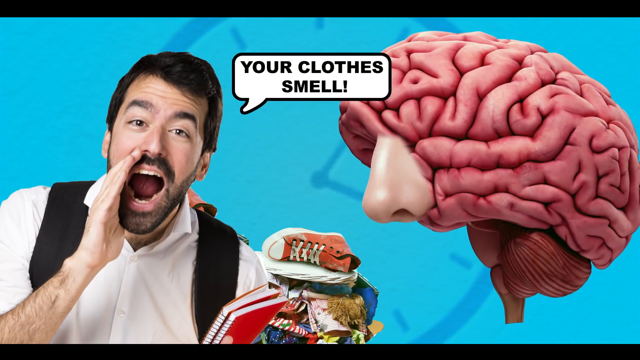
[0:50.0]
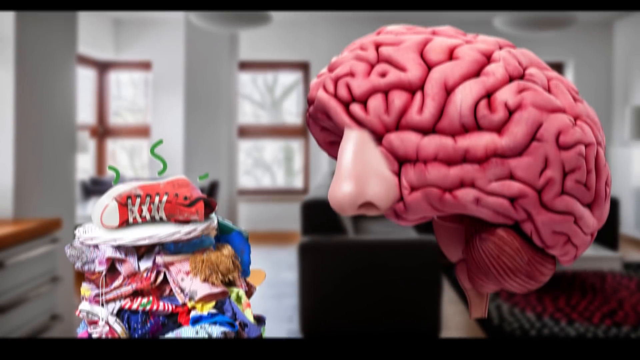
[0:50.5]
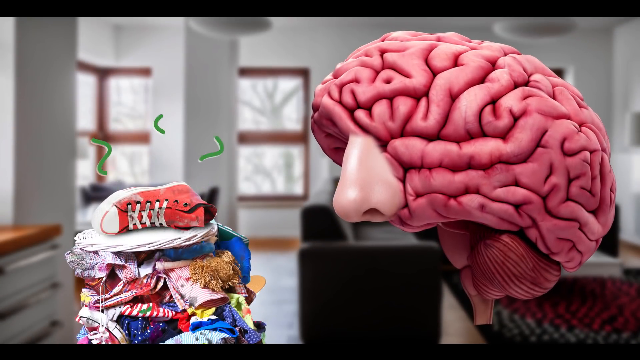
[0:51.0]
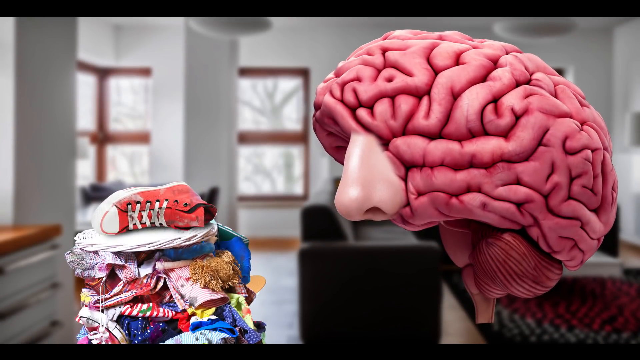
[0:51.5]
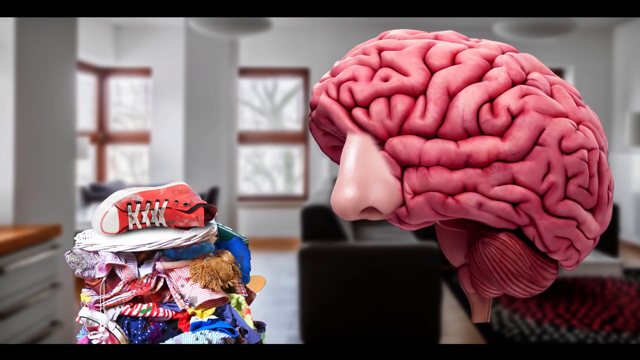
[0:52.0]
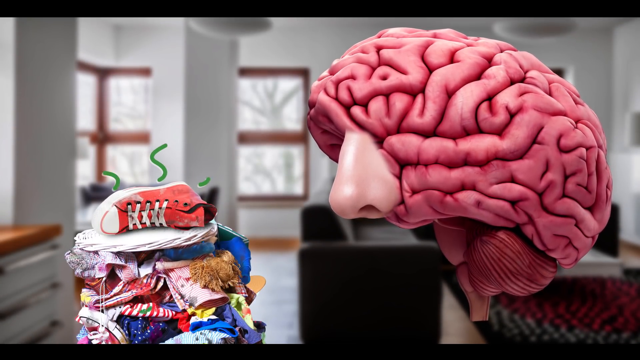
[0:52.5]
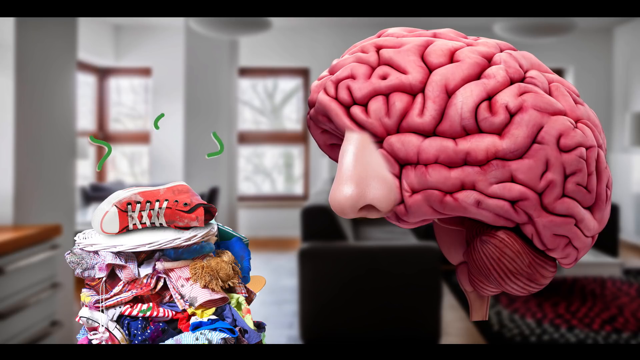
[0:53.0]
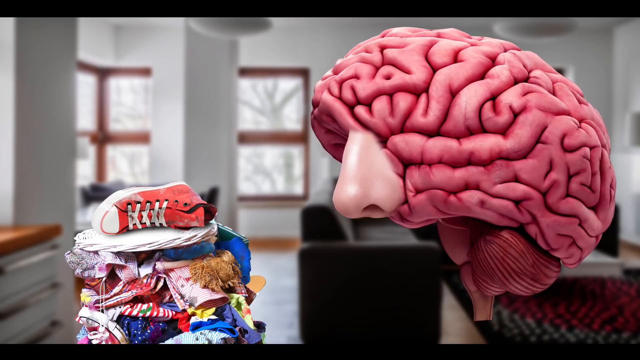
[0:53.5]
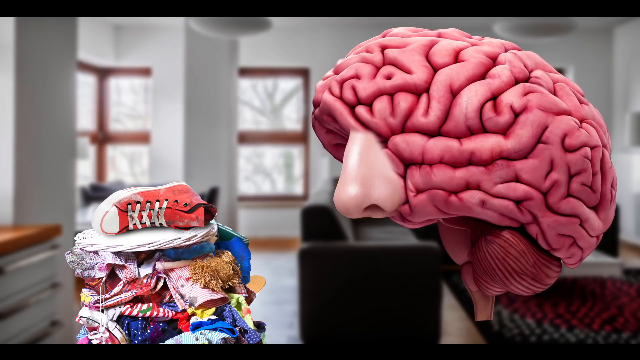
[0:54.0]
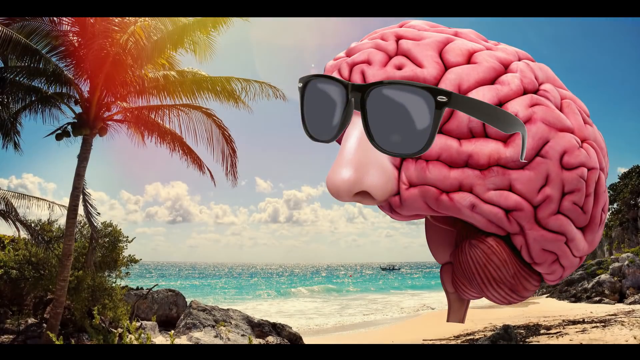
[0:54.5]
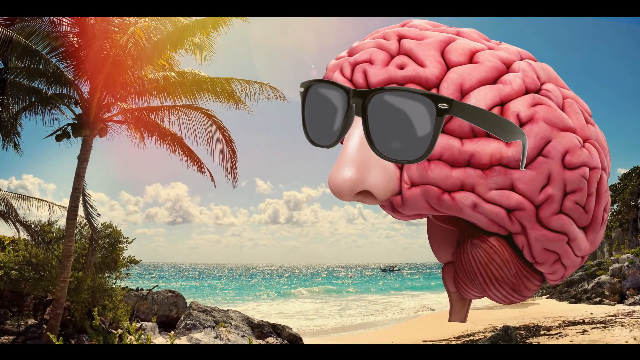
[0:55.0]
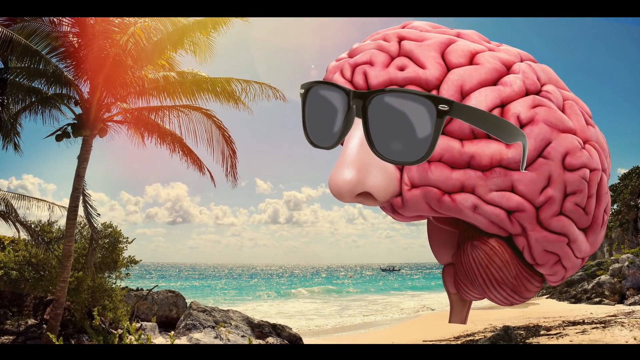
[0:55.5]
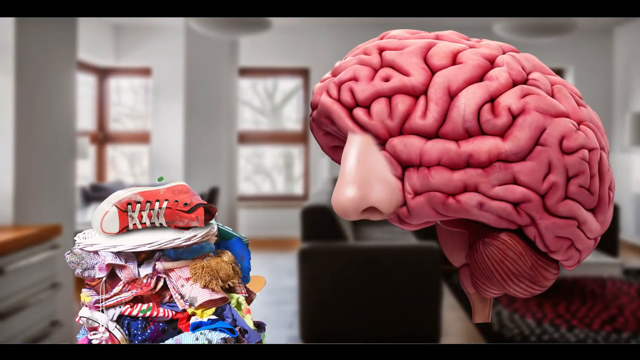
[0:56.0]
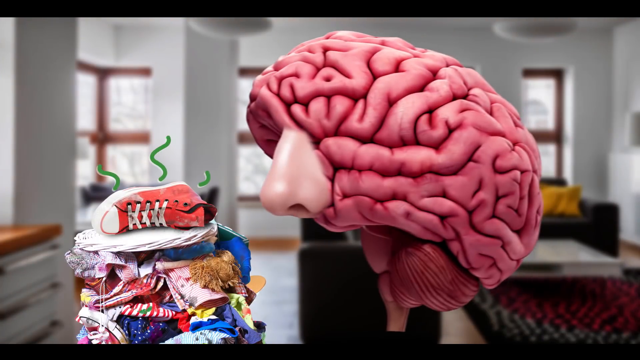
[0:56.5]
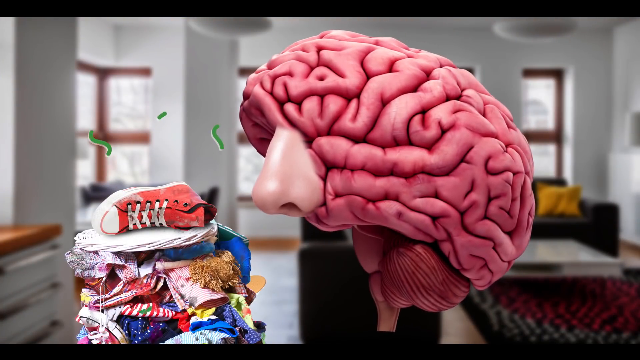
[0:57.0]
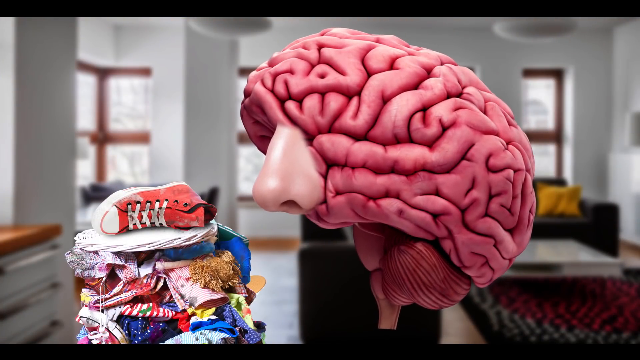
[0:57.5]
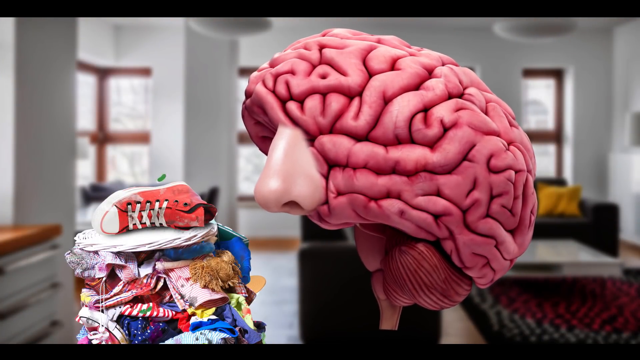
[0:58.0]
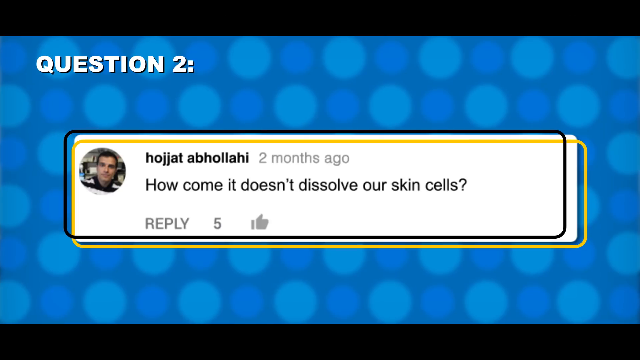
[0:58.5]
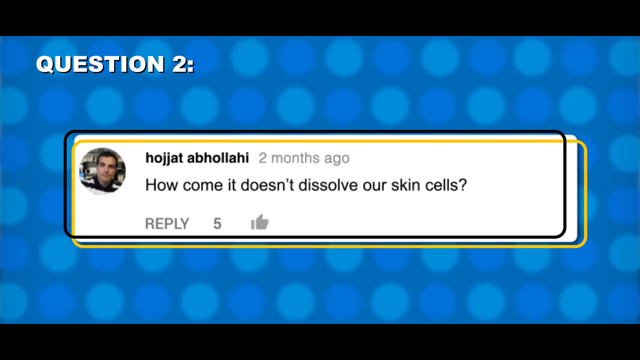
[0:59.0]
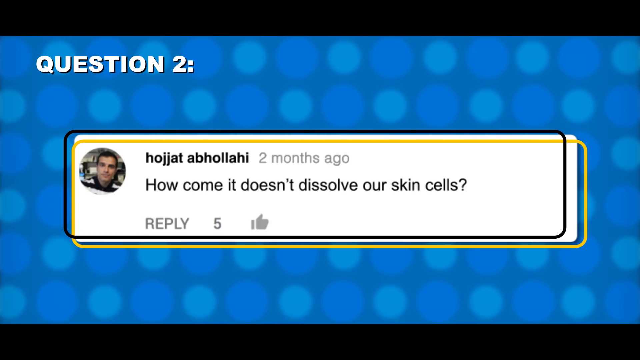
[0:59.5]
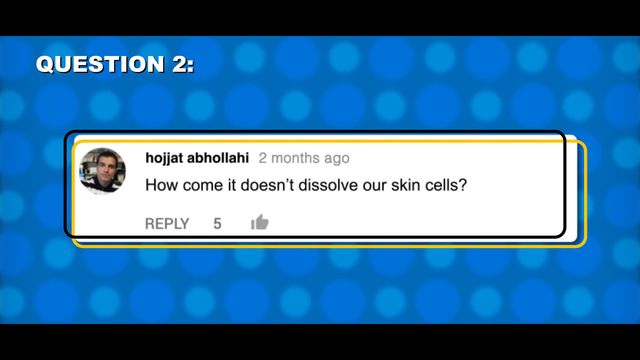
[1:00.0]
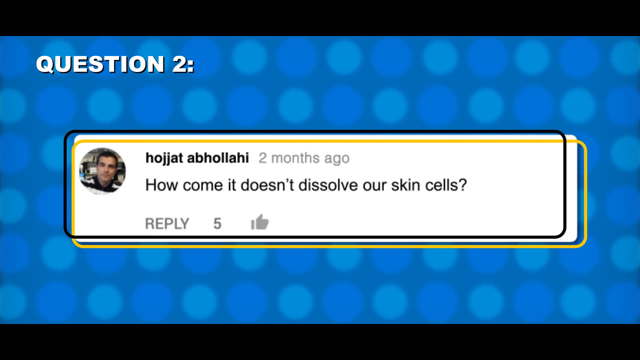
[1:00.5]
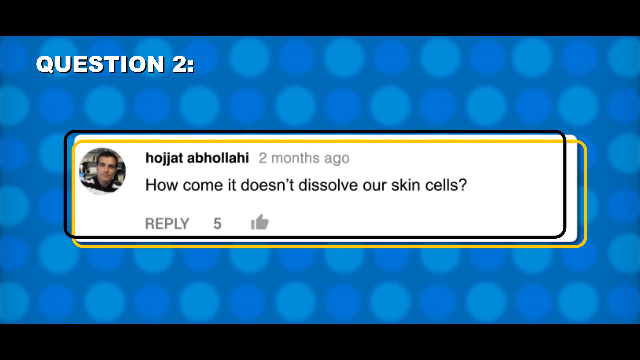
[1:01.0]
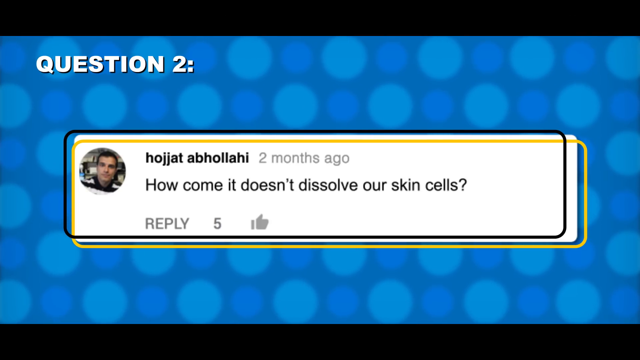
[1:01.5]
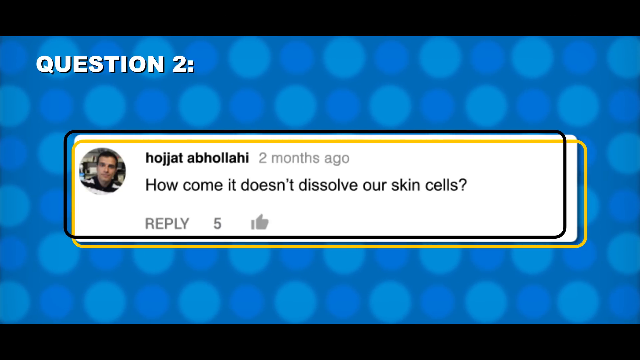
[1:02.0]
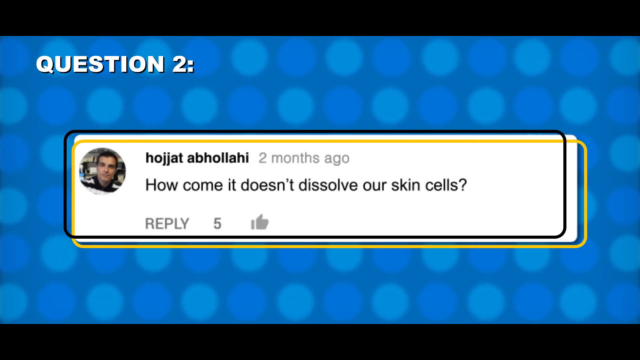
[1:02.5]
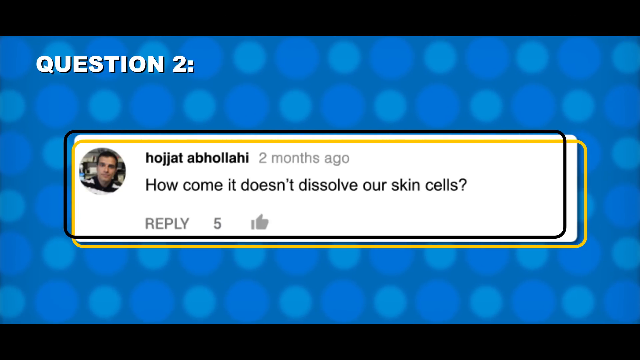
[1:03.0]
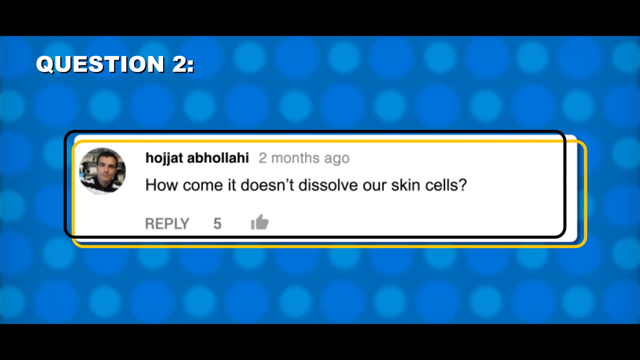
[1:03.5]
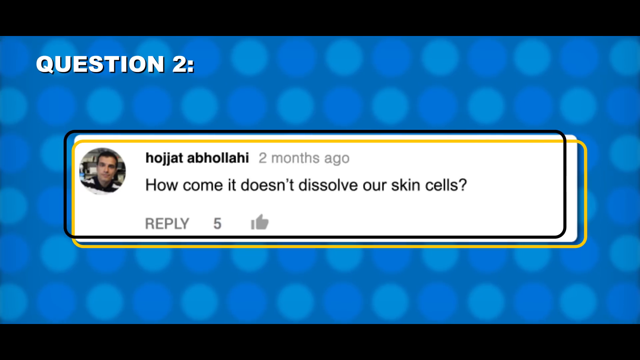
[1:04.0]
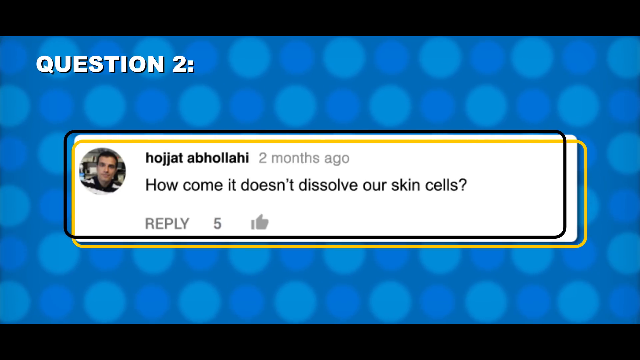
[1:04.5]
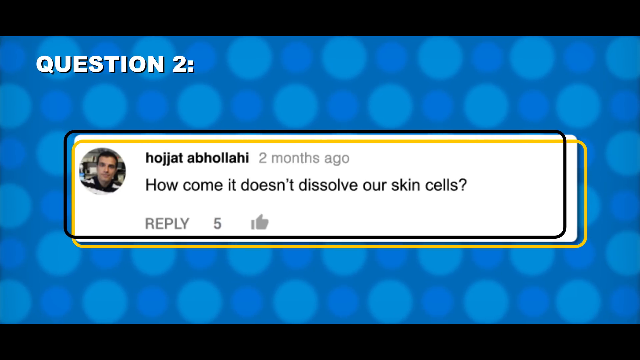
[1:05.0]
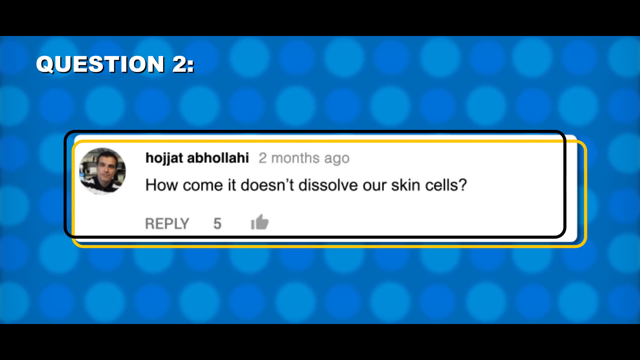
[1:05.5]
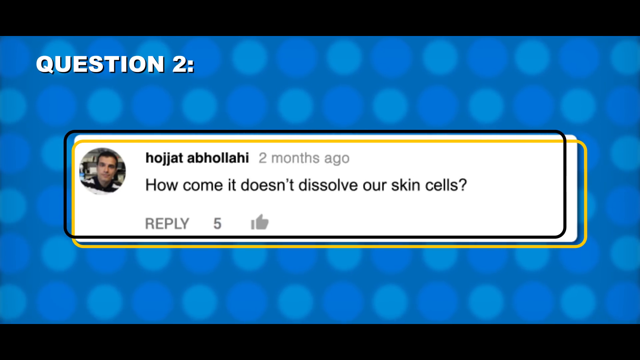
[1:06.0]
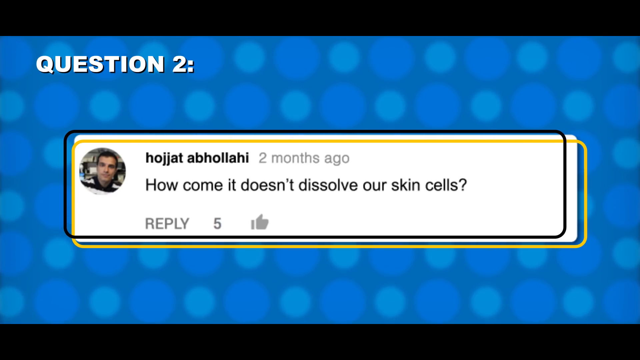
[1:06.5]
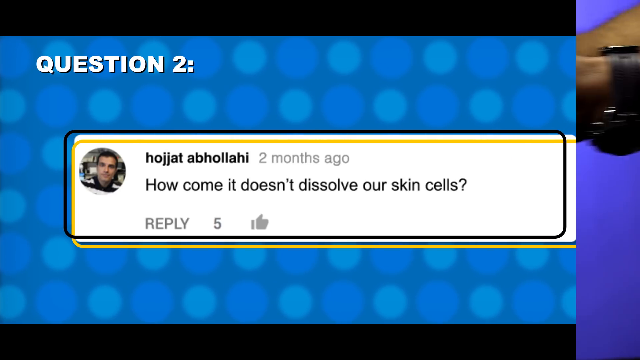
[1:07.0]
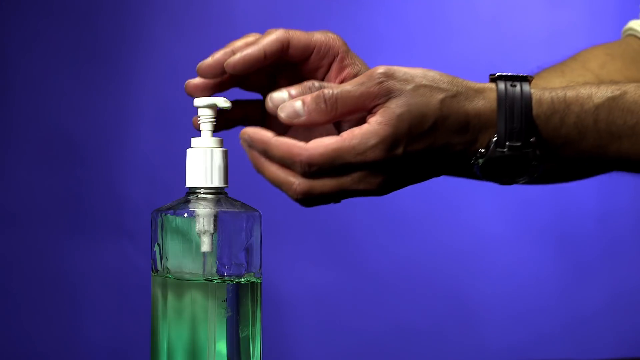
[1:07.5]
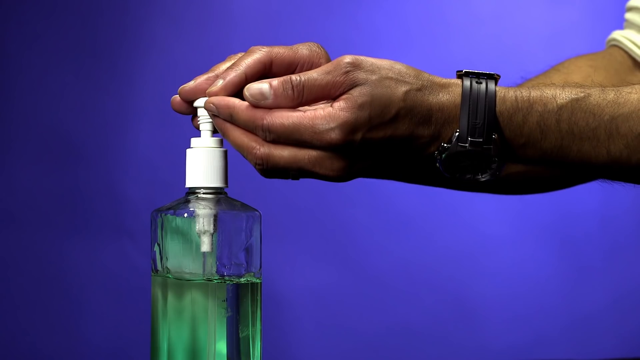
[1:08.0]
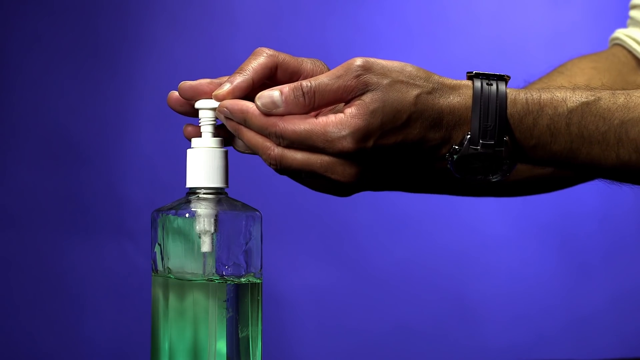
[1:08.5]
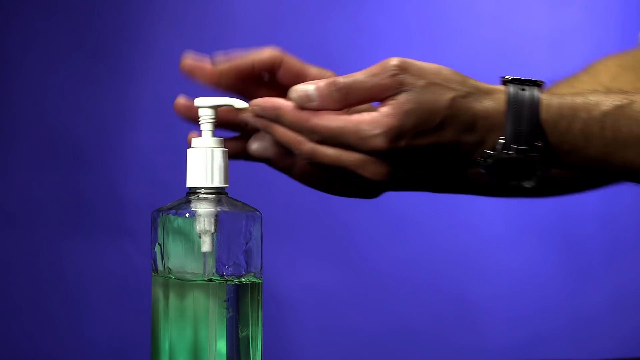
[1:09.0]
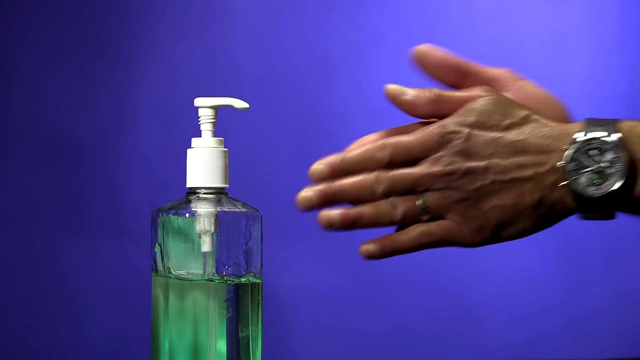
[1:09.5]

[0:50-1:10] The same brain with the nose and the same pile of stinky clothes are shown, this time in what looks to be a large living room or an office waiting room. The scene changes to the brain wearing sunglasses in a tropical beach setting with a palm tree, and then he comes back to the stinky clothes, apparently indicating that he went on vacation, came back home, and can smell the stinky clothes again. Next, question 2 pops up, saying "how come it doesn't dissolve our skin cells?" A scene with a bottle of green sanitizer follows. Only the arms and hands of a man wearing a watch on his wrist are visible; he puts his hands underneath the sanitizer, prepares to pump, pumps out some sanitizer and rubs it together on his hands.